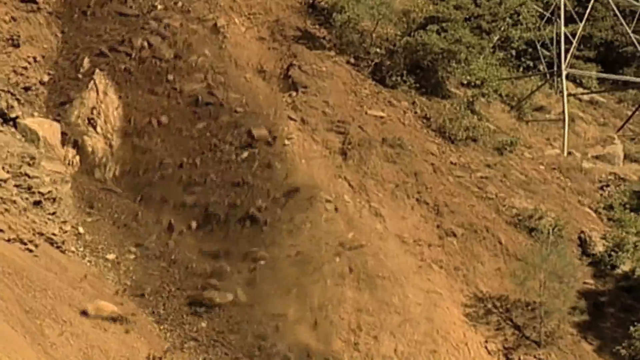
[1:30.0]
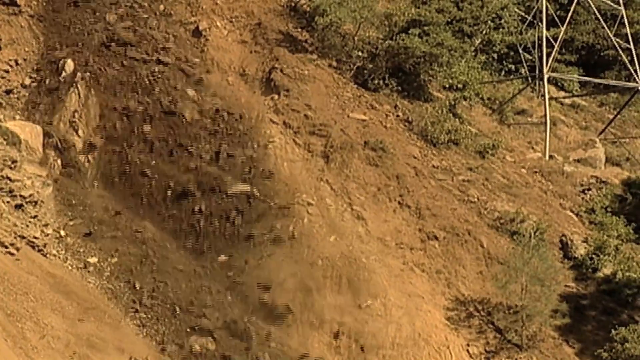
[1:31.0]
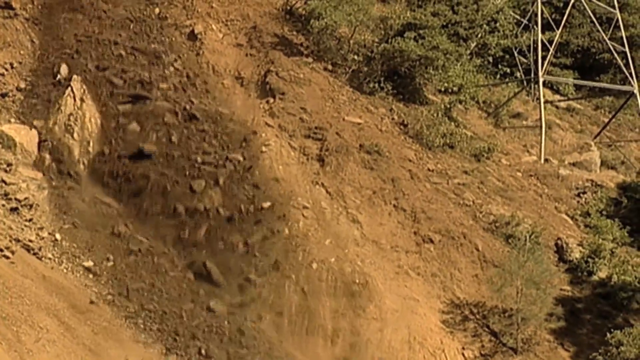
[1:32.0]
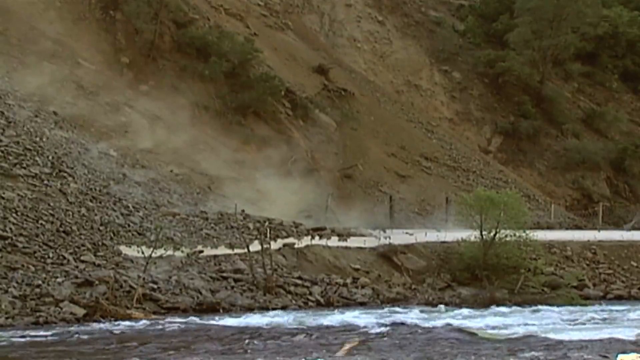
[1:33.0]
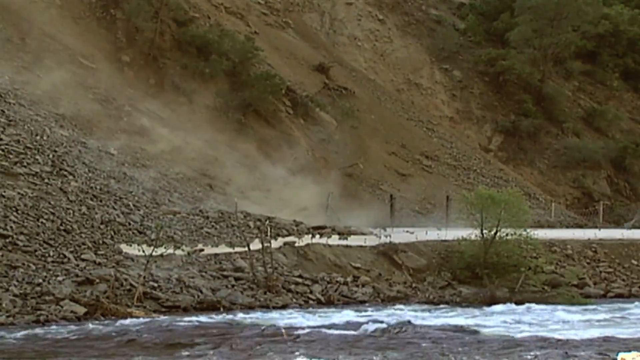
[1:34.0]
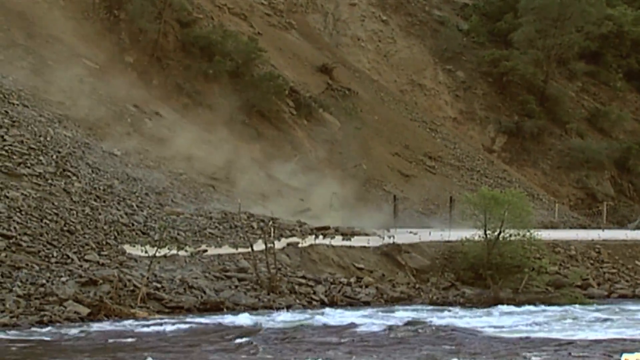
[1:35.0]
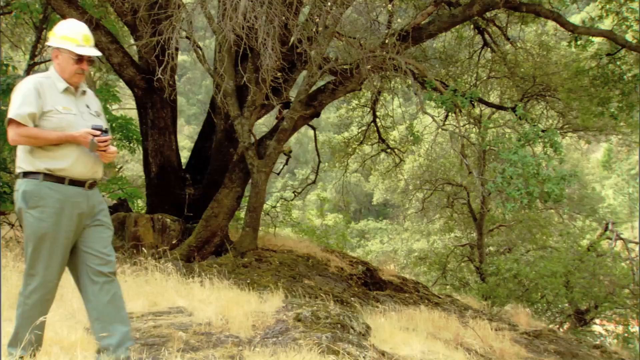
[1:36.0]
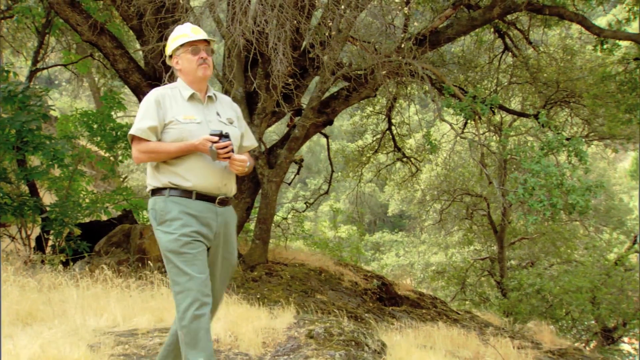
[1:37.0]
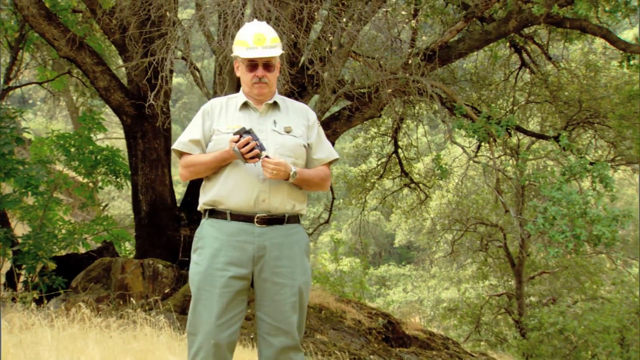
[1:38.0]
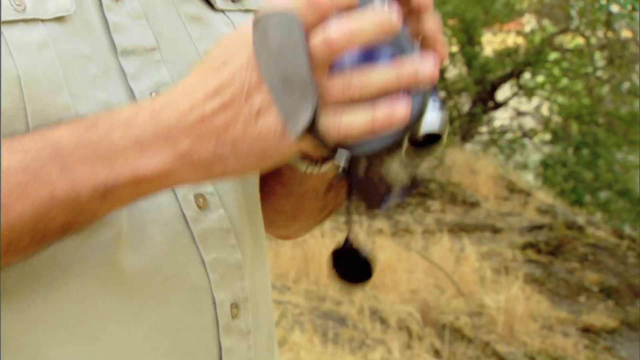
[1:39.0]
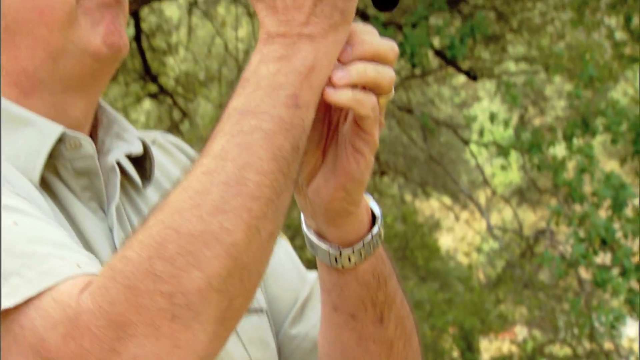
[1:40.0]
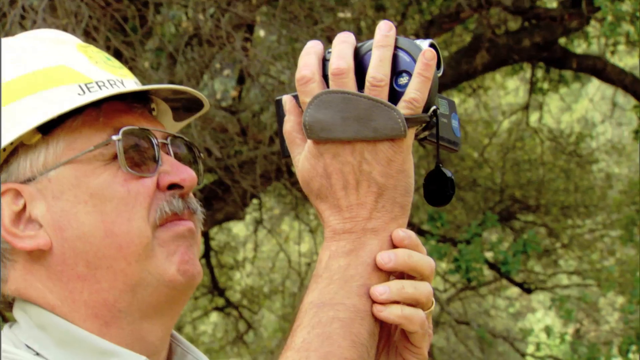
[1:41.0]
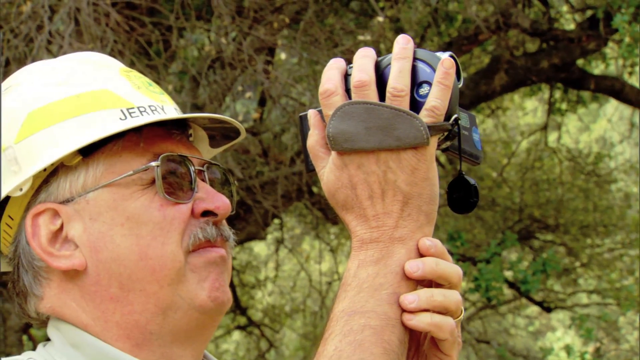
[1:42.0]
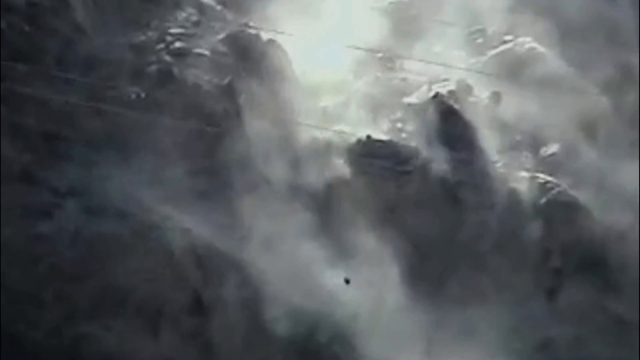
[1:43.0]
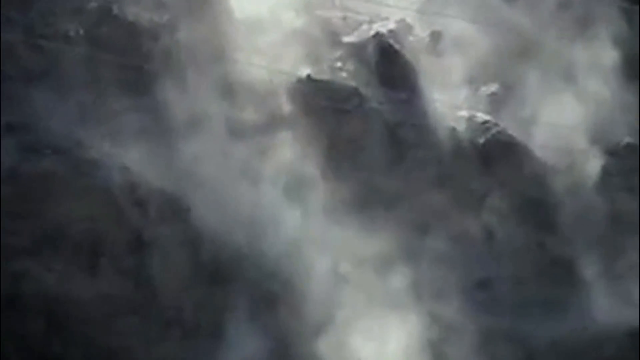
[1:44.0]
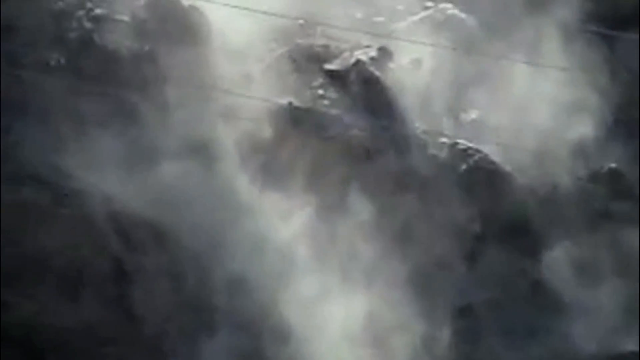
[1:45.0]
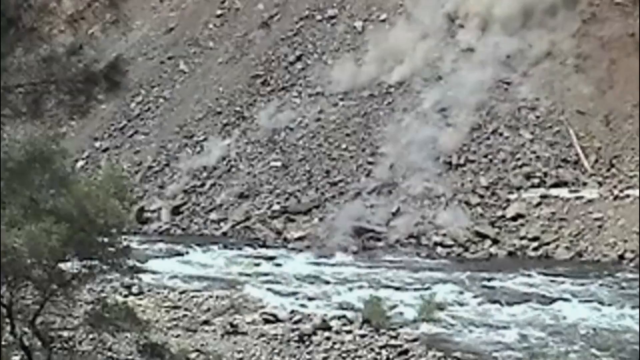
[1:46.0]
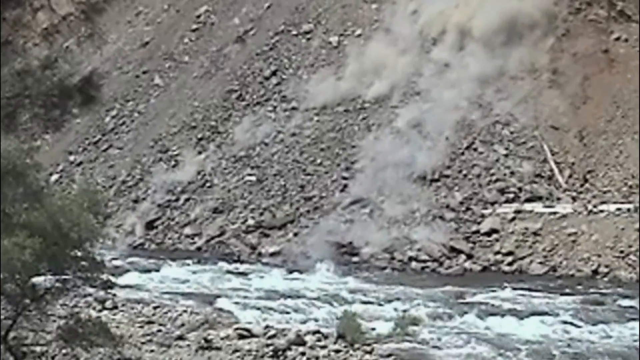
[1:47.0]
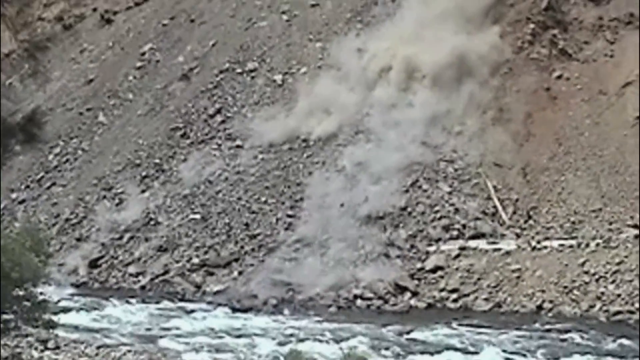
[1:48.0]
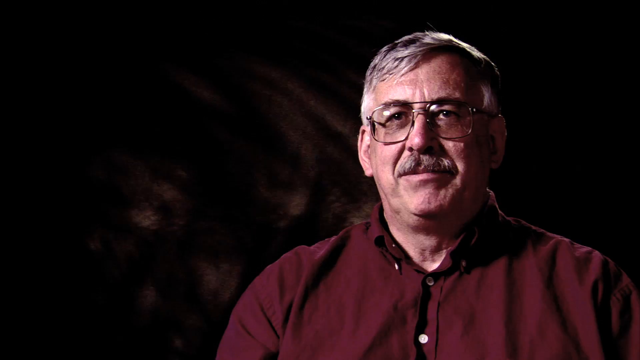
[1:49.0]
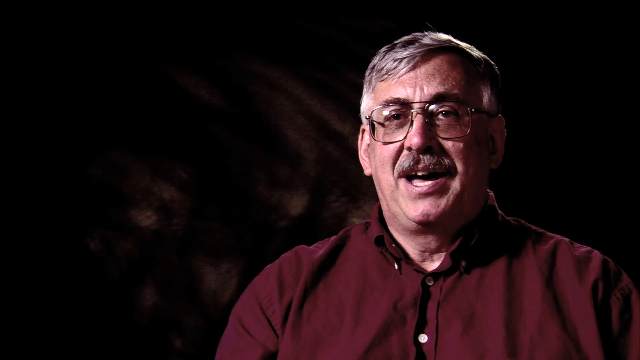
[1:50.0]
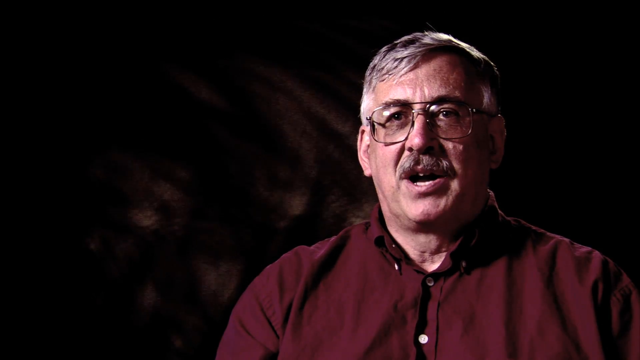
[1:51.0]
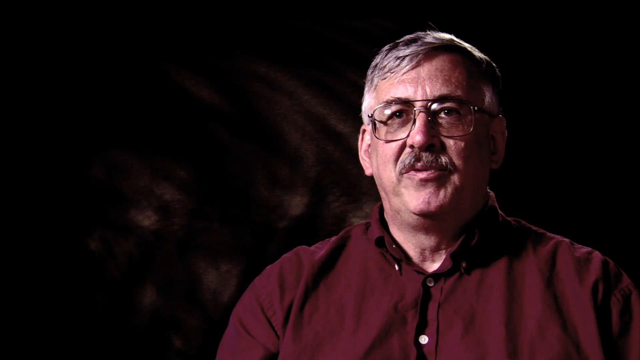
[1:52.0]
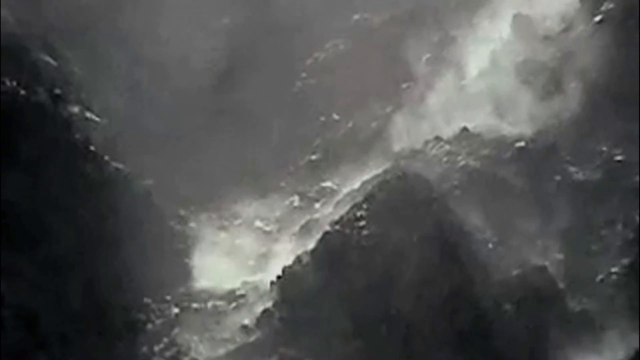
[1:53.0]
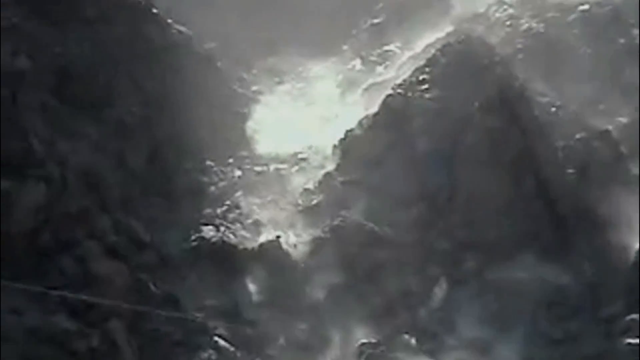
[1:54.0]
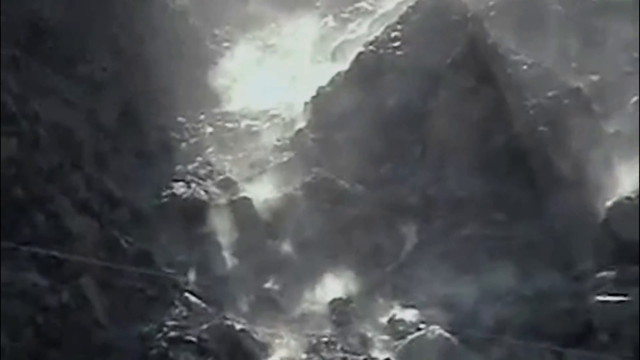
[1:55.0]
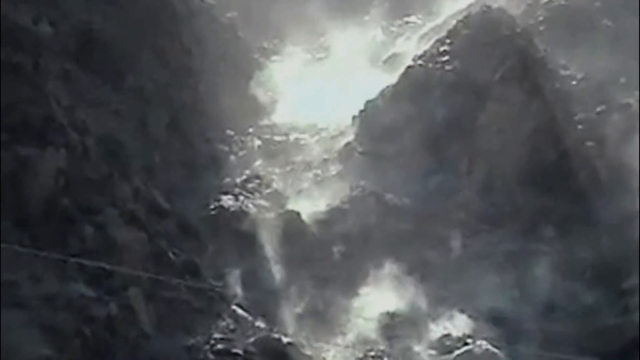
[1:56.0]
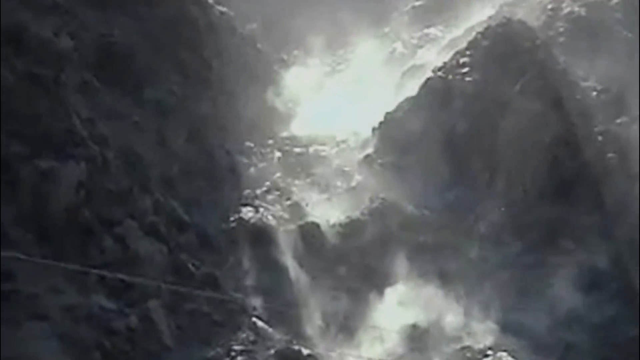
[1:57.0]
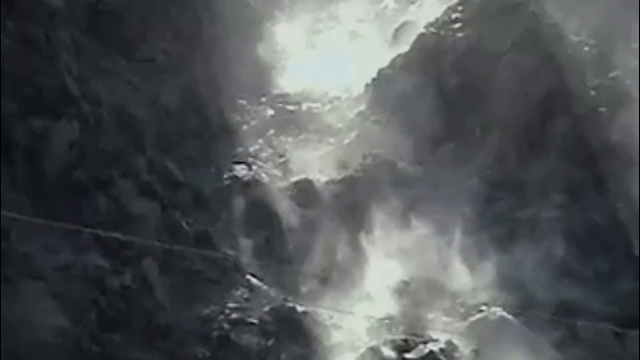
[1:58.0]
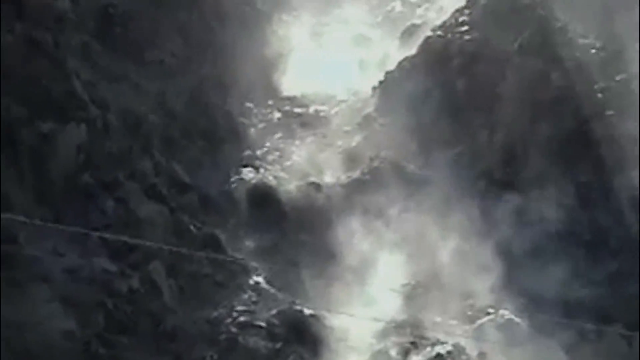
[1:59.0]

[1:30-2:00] A landslide occurs on a very terracotta-colored mountain on the left side of the frame, with rocks falling from above at a very rapid pace. The video then shows Jerry outdoors wearing a hard hat and sunglasses and holding a camera, observing the landslides. He looks to be in his early 60s, has a gray salt-and-pepper mustache, is Caucasian, and wears a uniform suggesting he works for the Department of the State Forest. He is briefly shown indoors in his interview, with the black background behind him, talking to the camera. The video then returns to an outdoor scene of a landslide in a very black-and-white-looking video, with smoke rising from the debris as it hits the ground from high above.